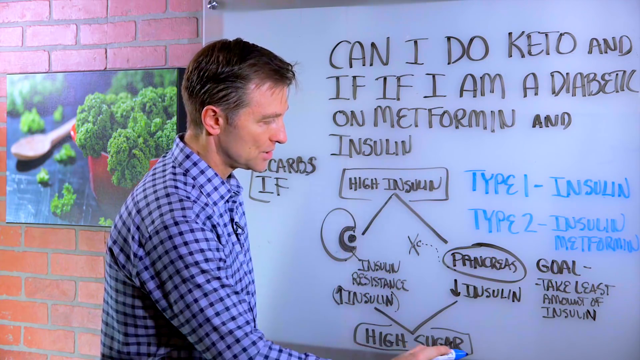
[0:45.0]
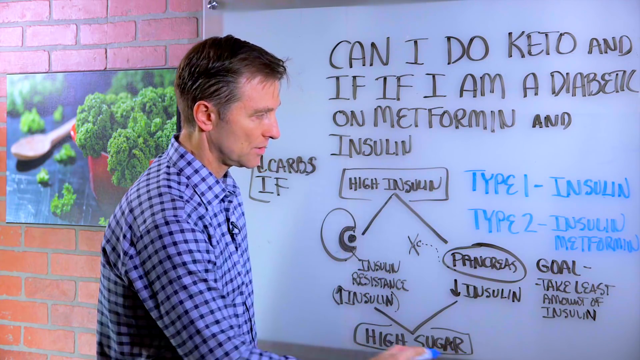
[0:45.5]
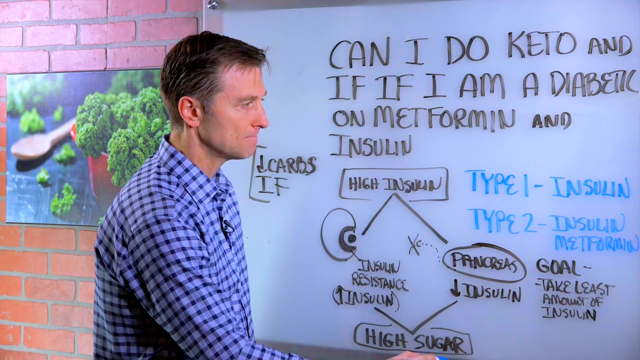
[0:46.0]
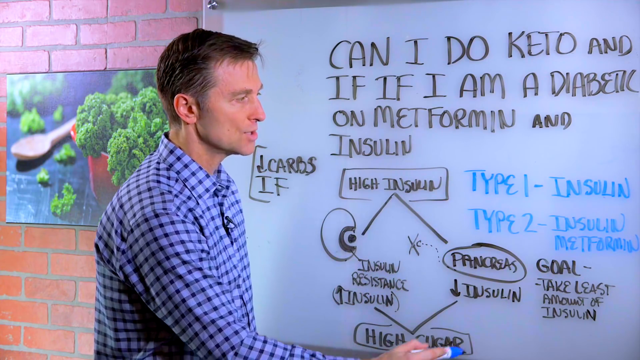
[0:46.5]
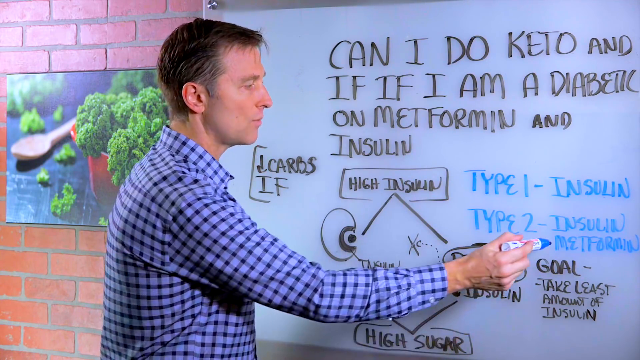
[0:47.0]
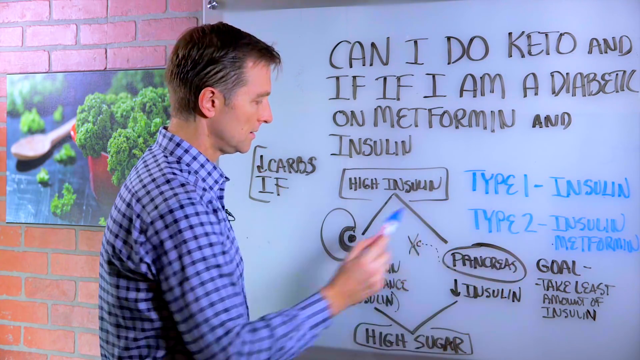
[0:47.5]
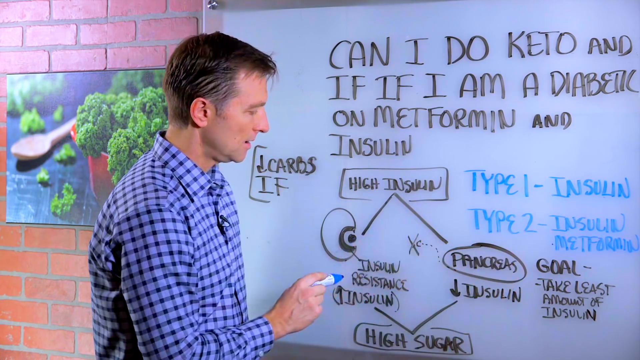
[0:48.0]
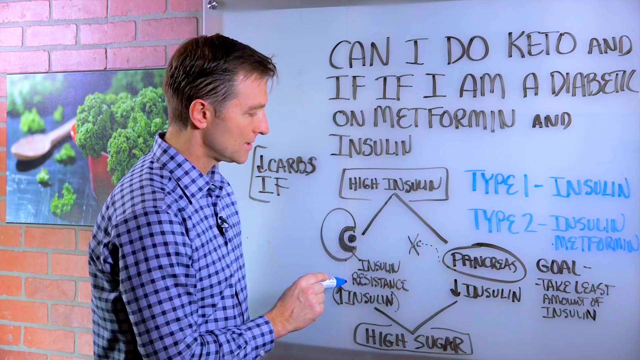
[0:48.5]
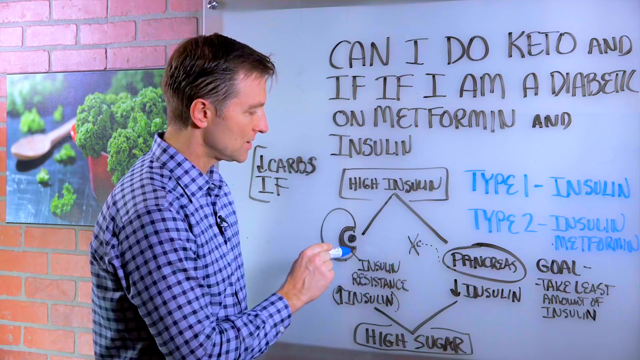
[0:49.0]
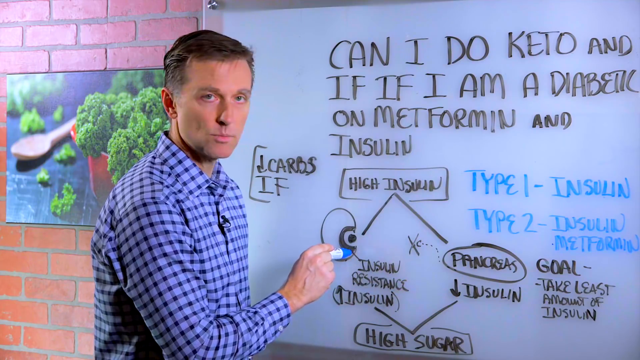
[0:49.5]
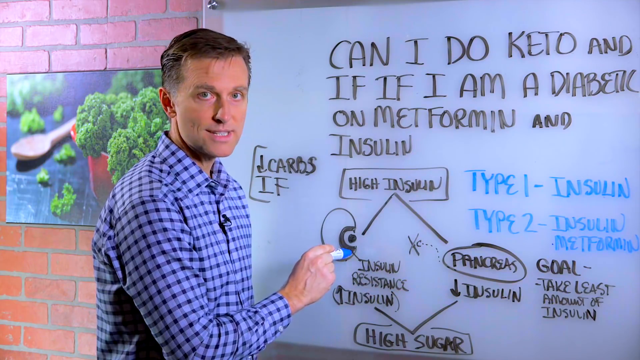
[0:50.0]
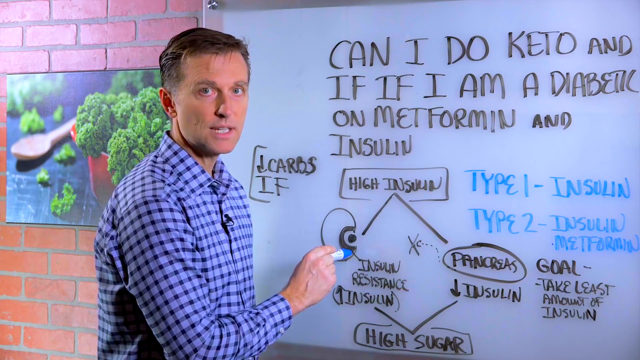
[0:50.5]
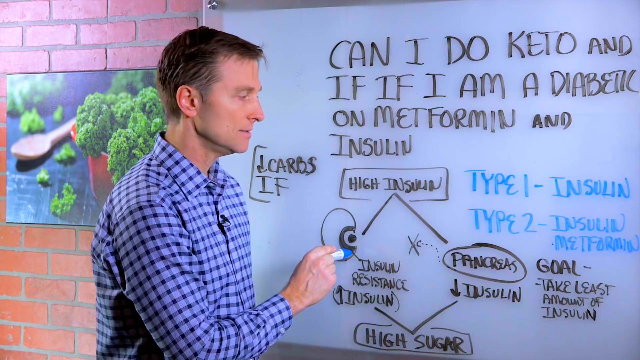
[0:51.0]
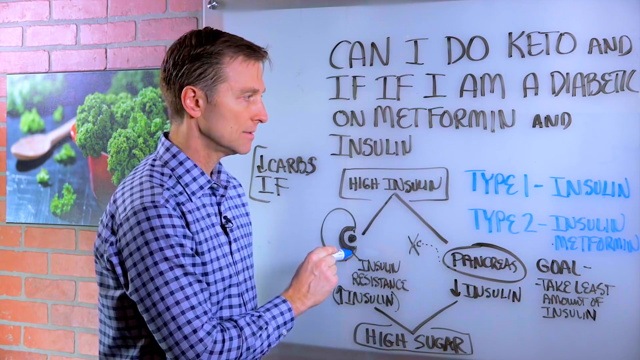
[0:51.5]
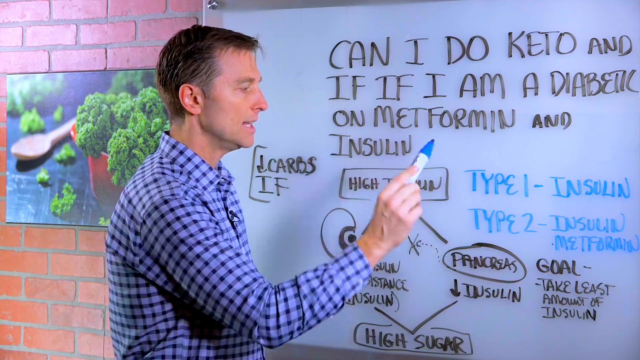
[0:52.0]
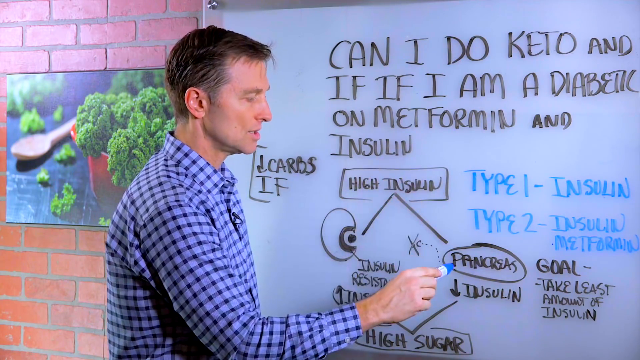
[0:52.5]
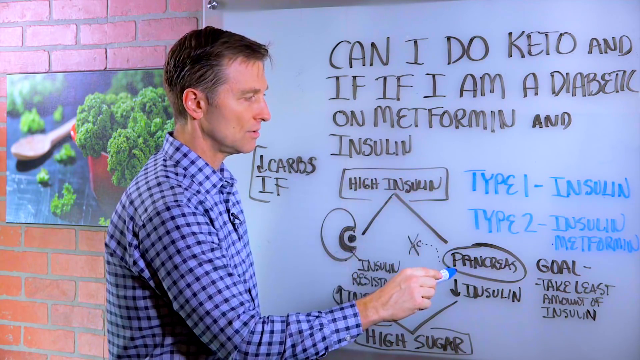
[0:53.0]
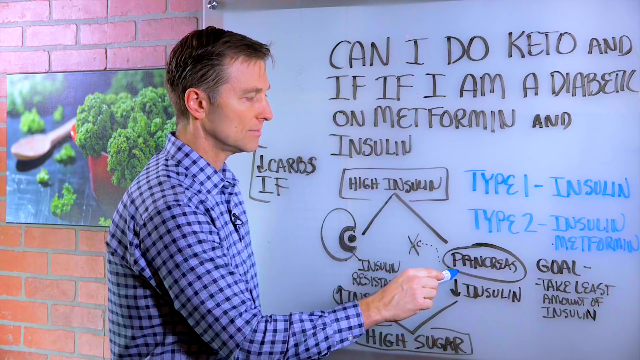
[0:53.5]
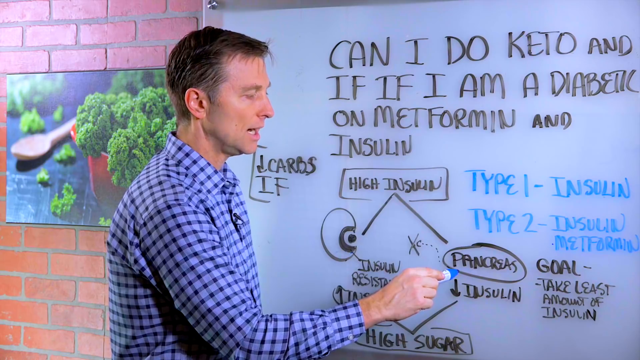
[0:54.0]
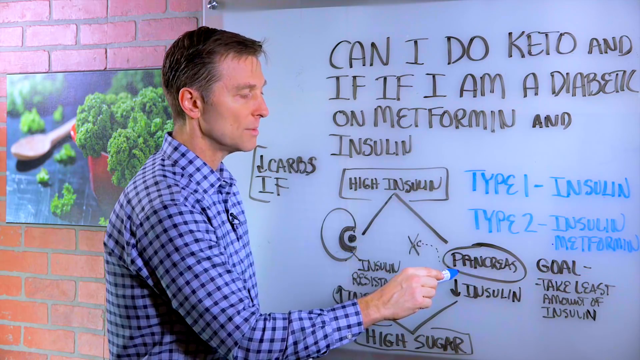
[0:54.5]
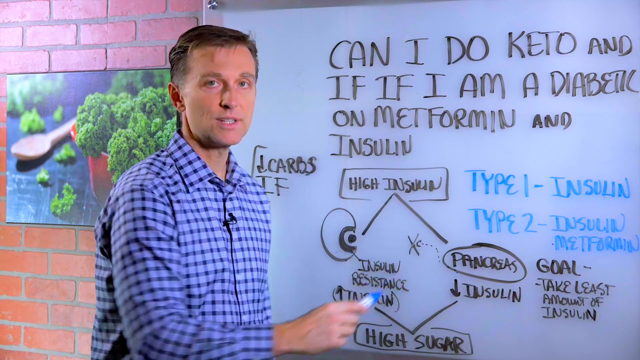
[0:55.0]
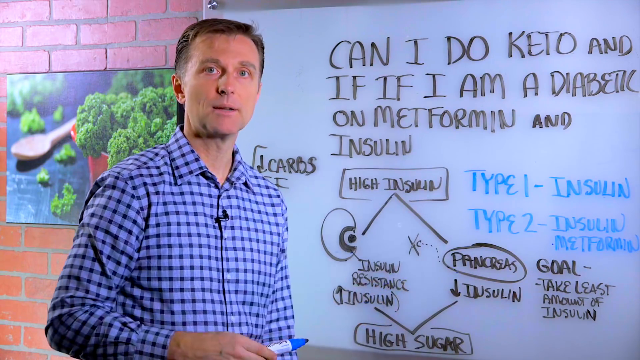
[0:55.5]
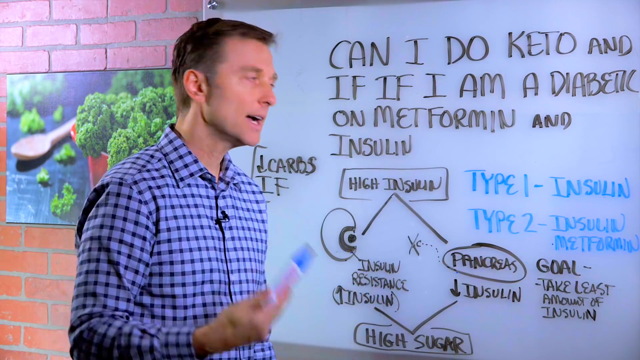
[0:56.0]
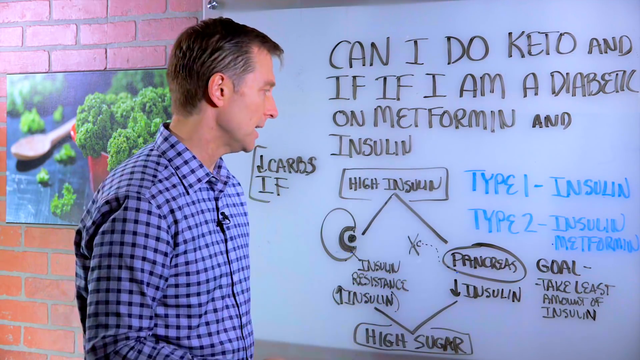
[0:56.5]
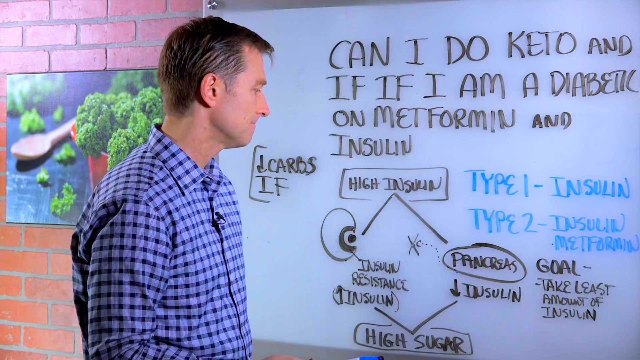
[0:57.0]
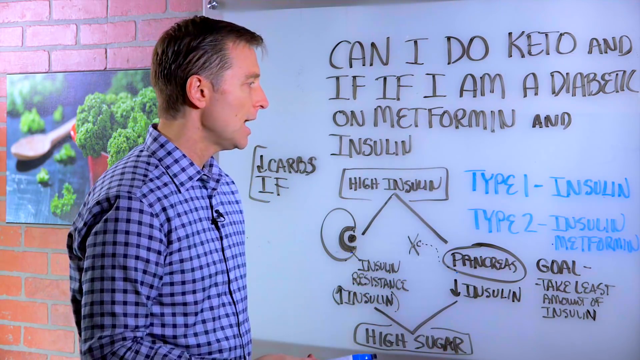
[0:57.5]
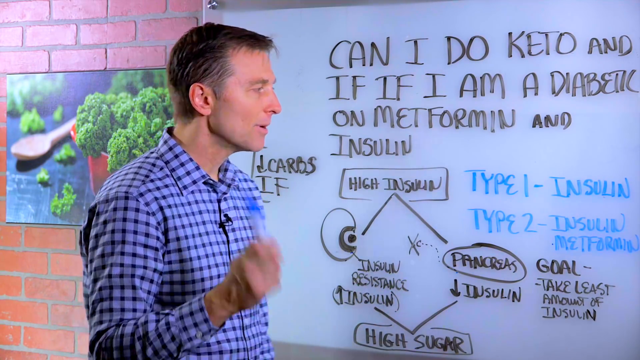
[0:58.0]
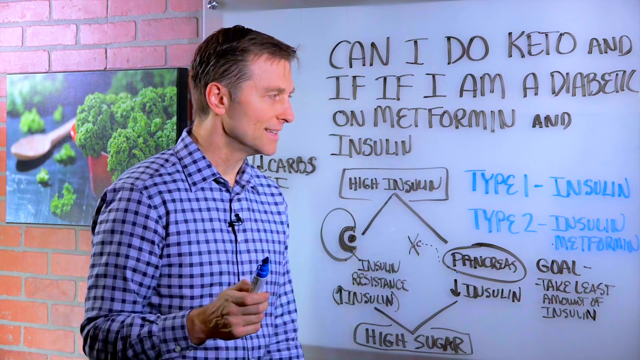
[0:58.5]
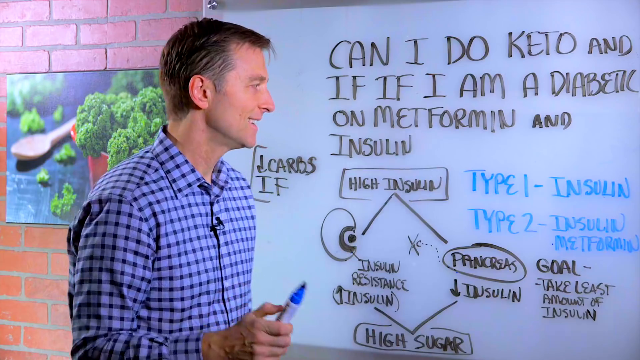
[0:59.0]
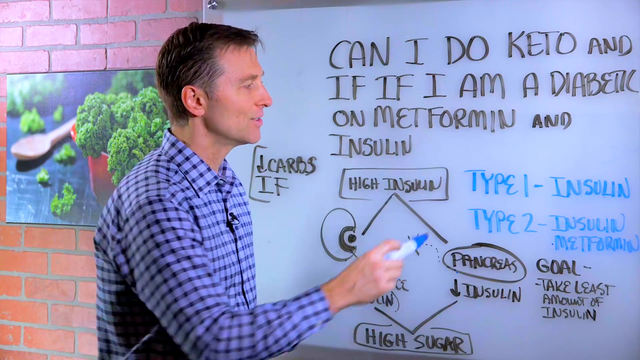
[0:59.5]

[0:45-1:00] With the blue marker, the man points back and forth between the part of the diagram that says insulin resistance and where it says type 2, then back to the pancreas where it says low insulin. He uses the marker to point to different parts of the board, focusing on insulin resistance and the pancreas in the diagram. He looks mostly at the whiteboard and occasionally at the camera.